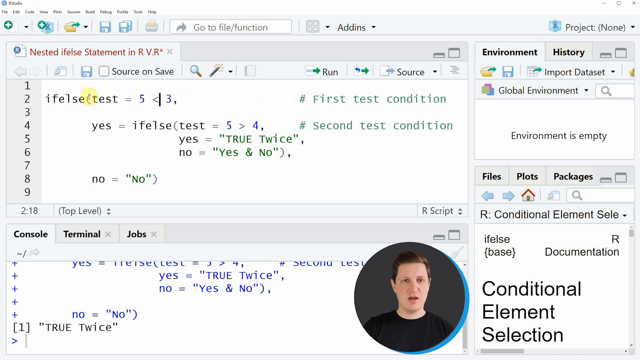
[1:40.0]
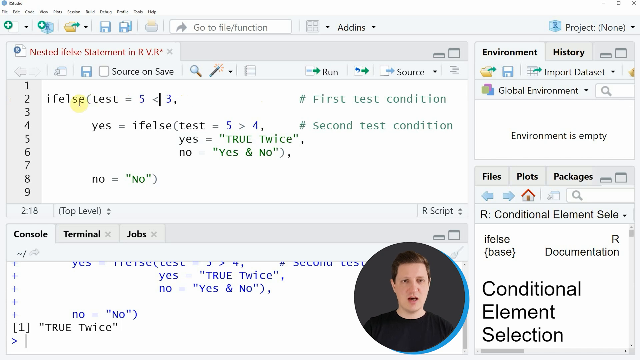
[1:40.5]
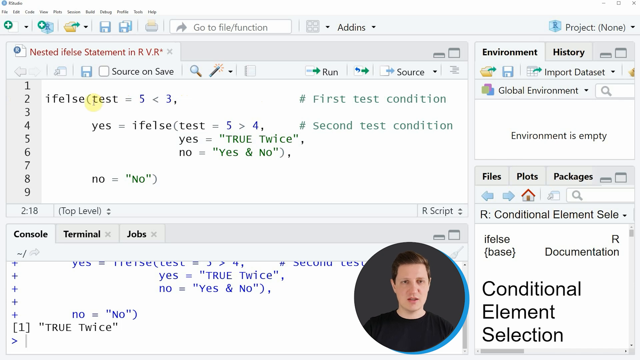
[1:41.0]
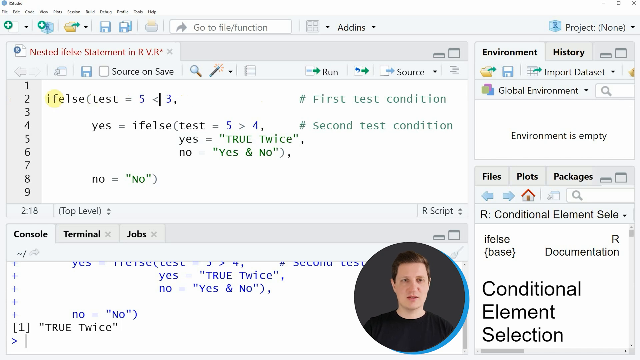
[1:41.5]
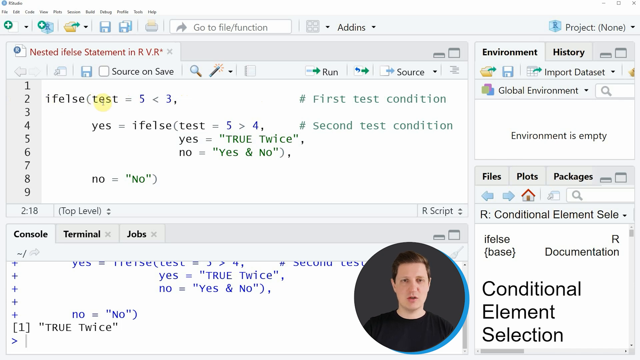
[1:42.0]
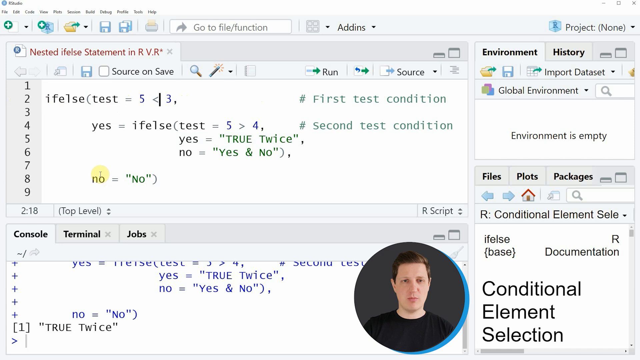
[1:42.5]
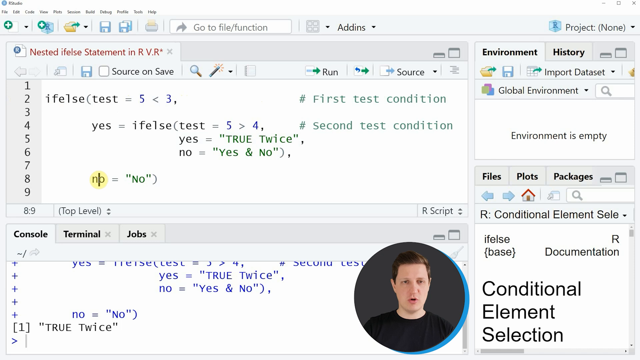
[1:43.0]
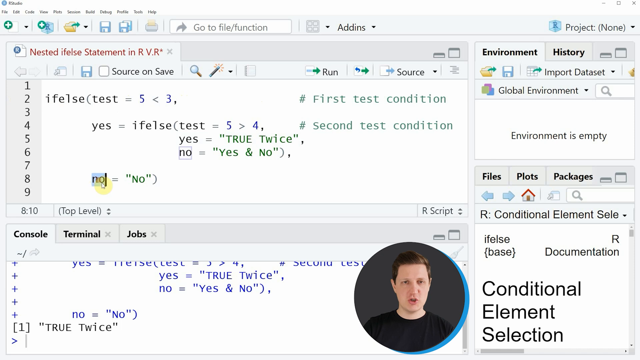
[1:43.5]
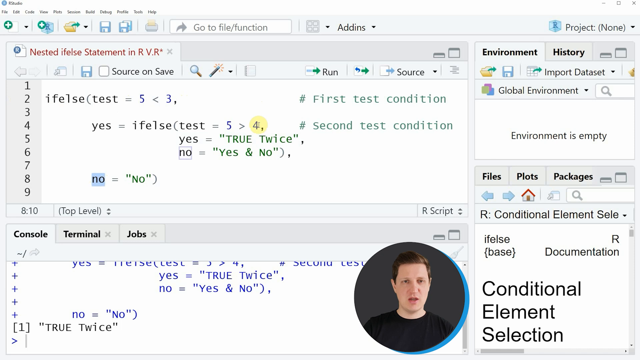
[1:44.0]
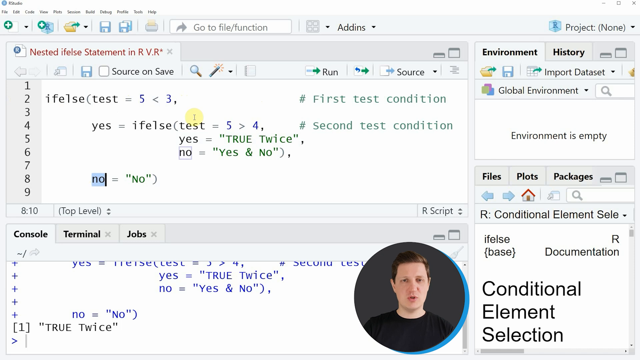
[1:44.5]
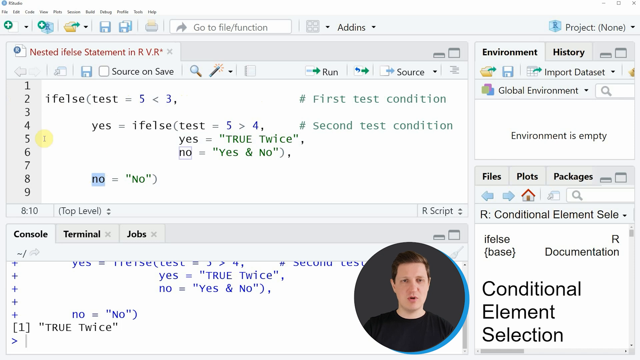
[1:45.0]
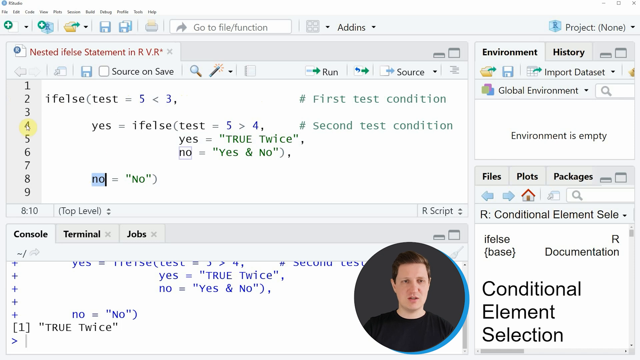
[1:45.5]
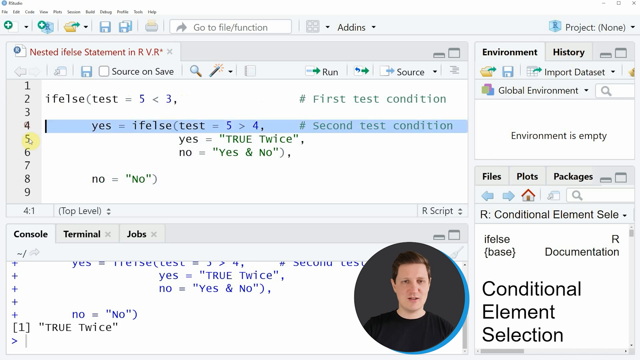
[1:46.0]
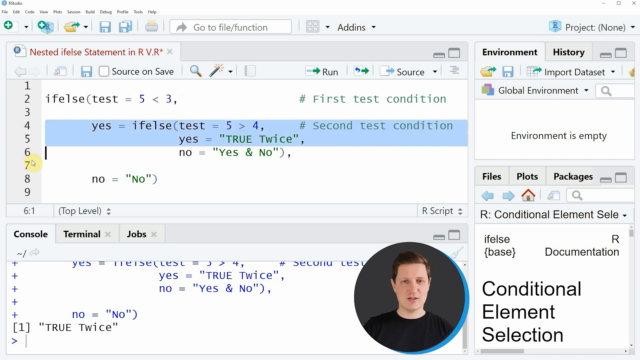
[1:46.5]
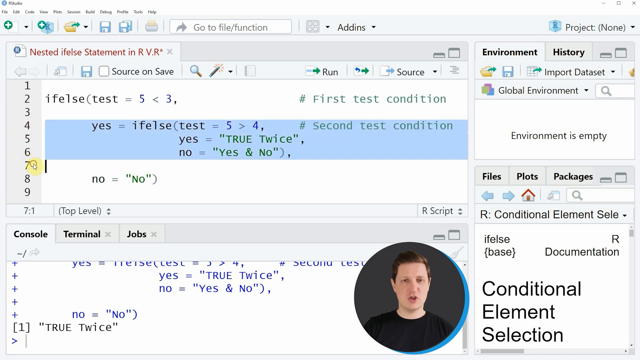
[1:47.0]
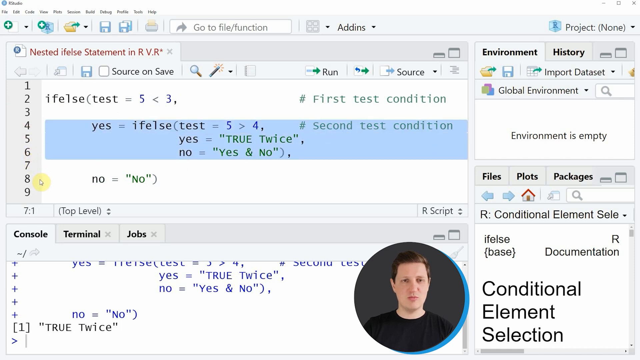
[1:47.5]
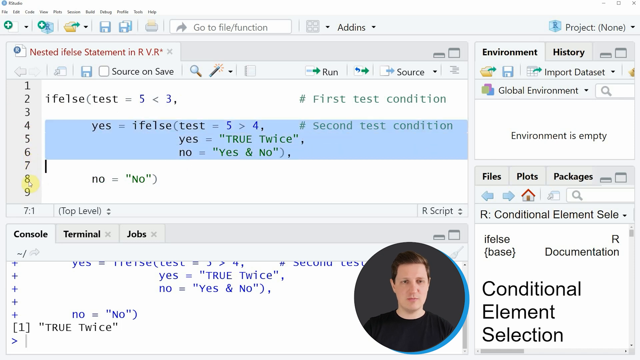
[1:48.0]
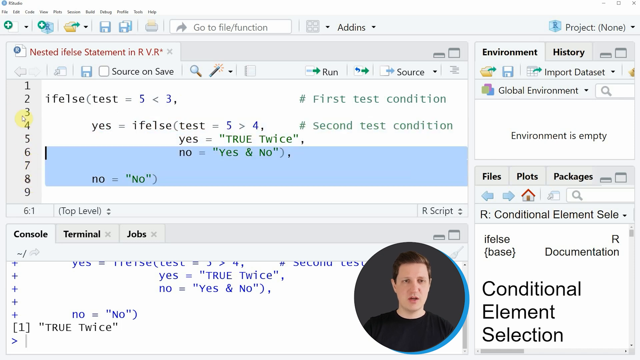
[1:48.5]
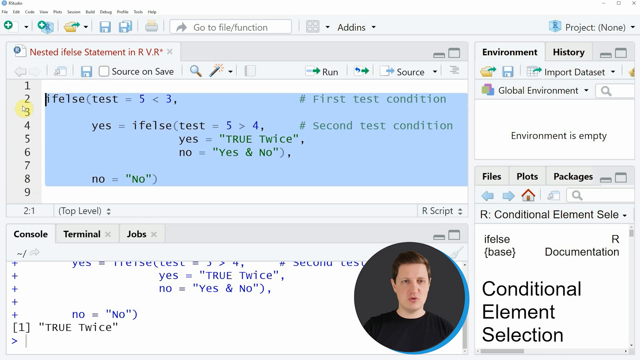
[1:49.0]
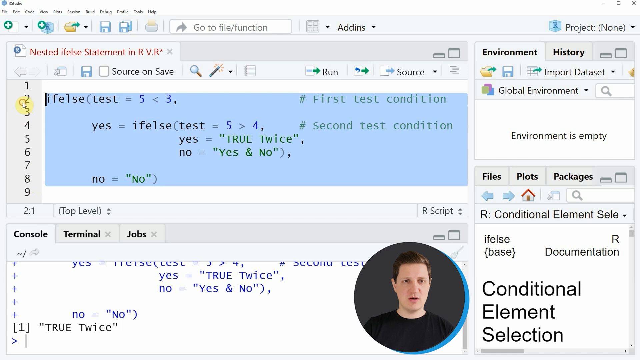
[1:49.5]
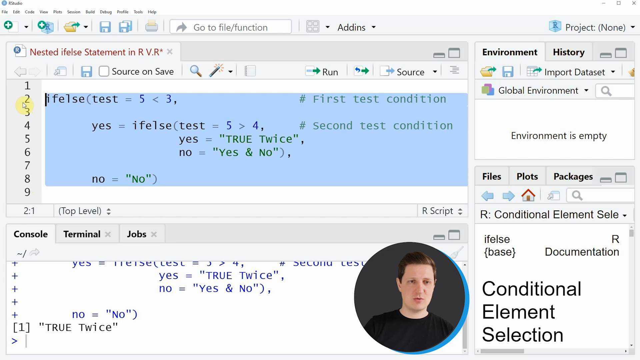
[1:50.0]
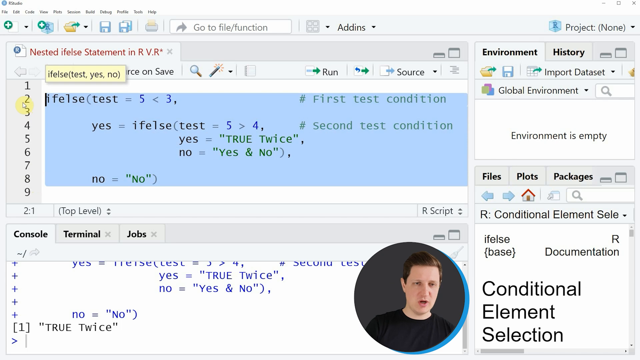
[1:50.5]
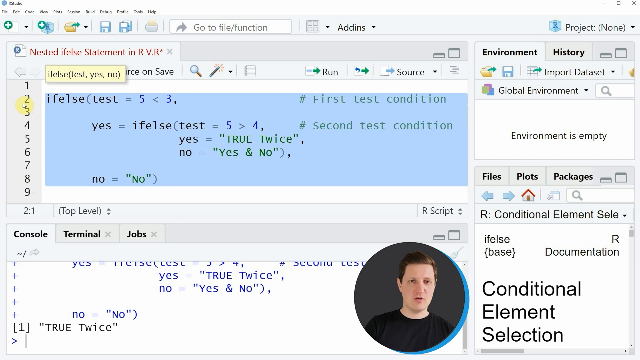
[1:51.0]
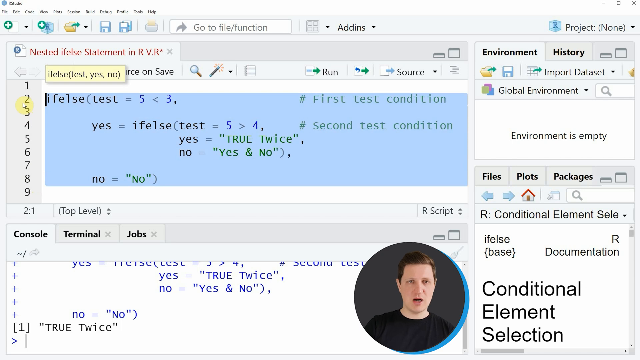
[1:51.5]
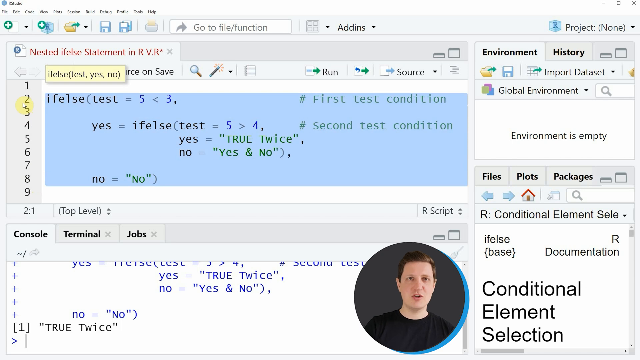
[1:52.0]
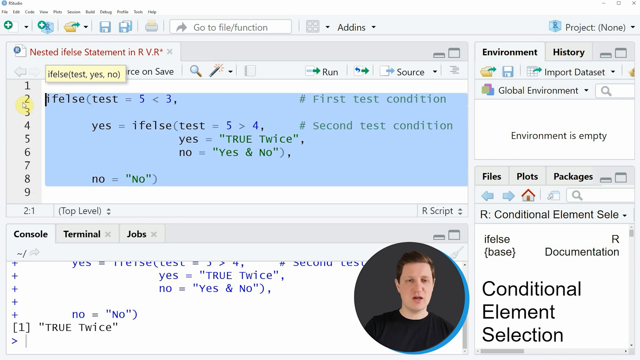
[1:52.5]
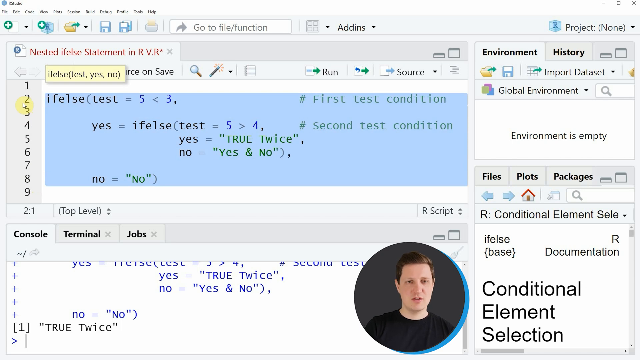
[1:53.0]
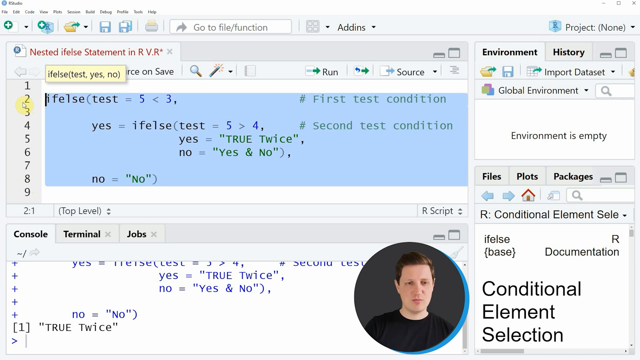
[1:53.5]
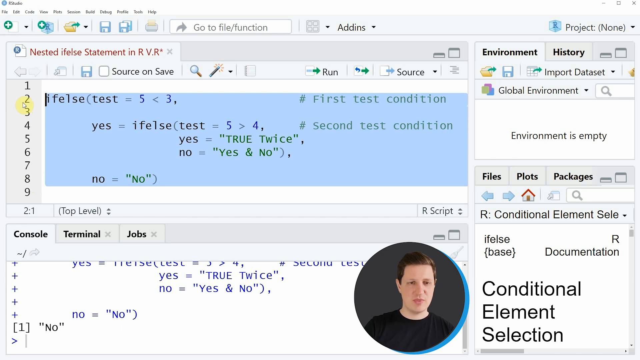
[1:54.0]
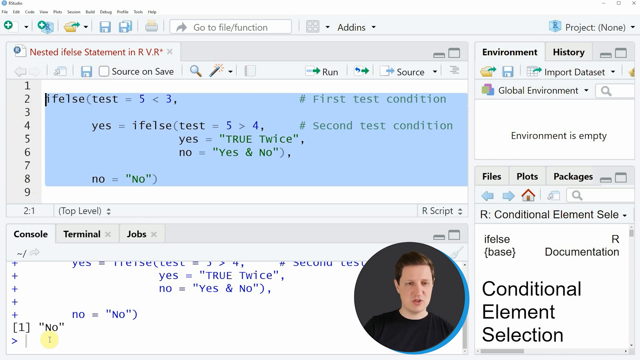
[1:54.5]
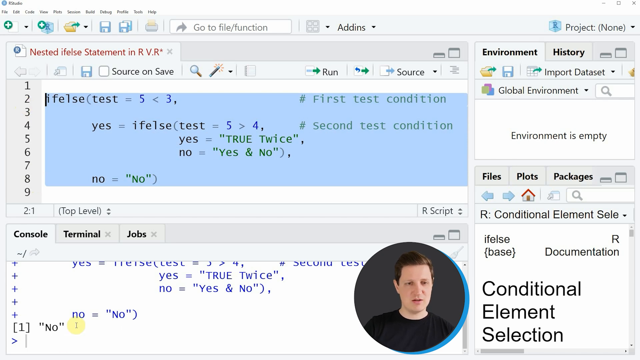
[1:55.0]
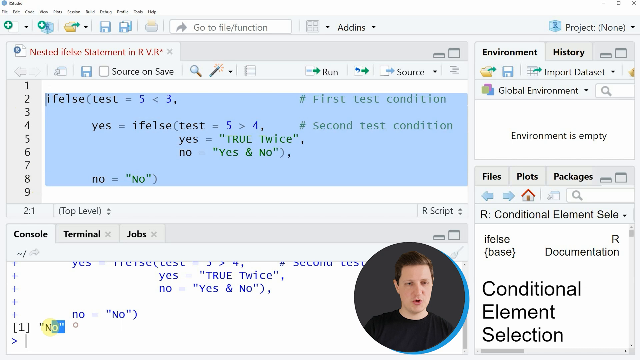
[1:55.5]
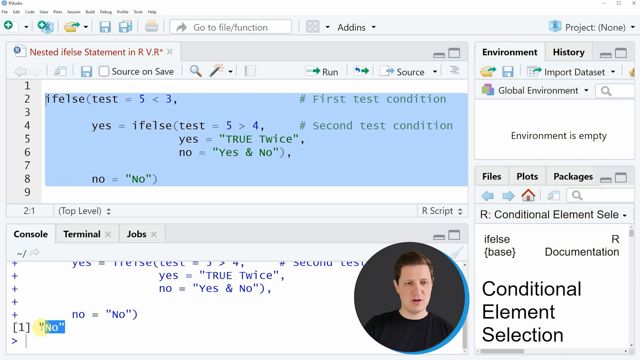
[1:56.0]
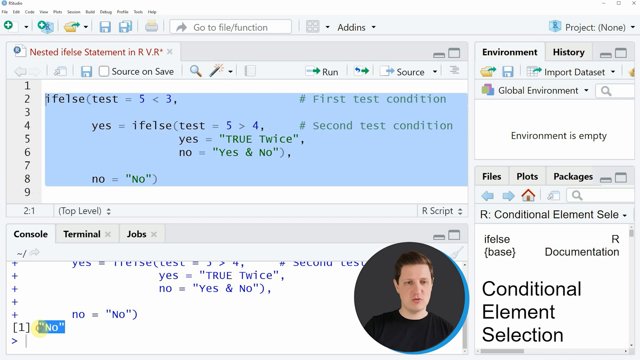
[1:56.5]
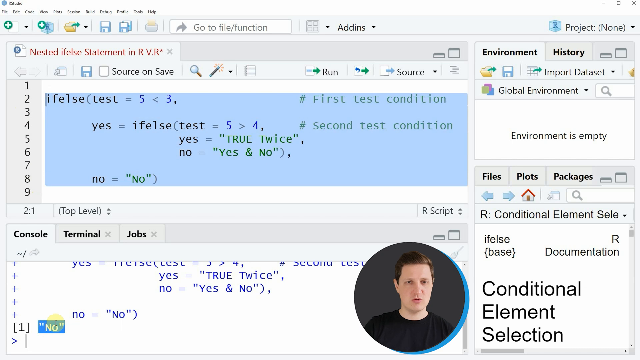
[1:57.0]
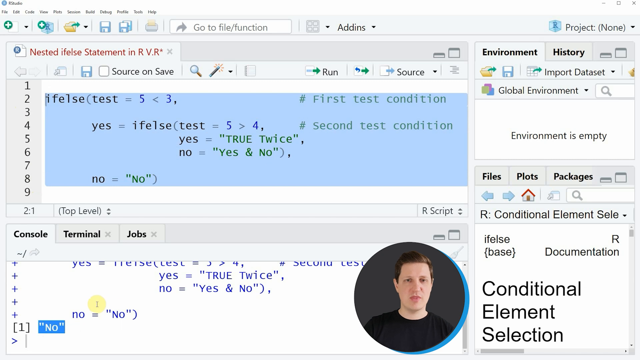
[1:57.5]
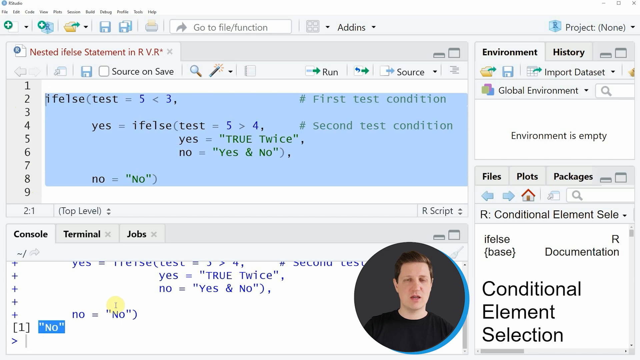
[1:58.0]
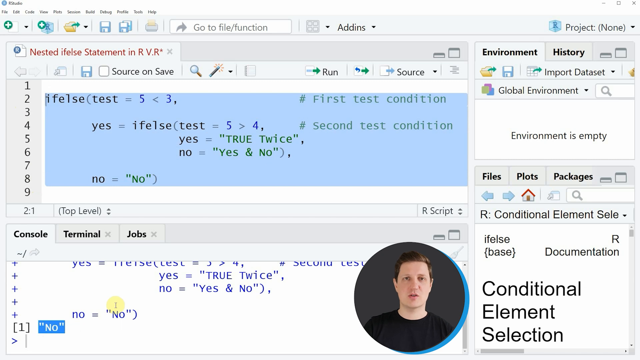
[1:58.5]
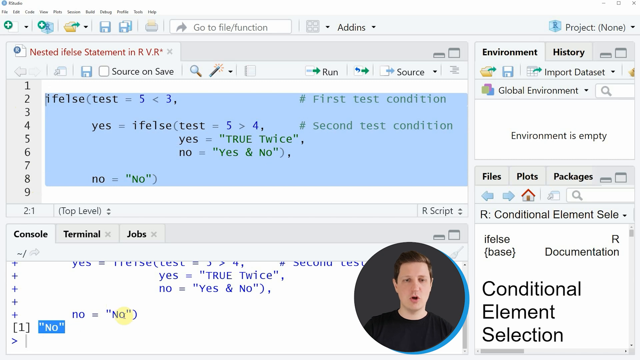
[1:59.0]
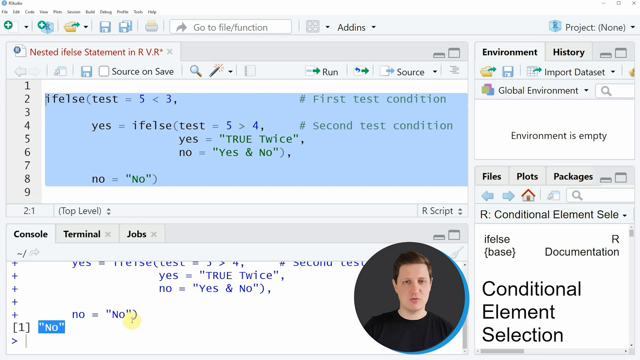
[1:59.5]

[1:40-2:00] The mouse, with its yellow circle highlight, is kind of hovering over the ifelse statement on line 2 in the top left "Nested Ifelse Statement in R V.R" panel. The cursor moves down to line 8, where it selects and highlights text, then kind of moves around rapidly a little. It clicks the number 4 on the left side and drags down to line 7, so all of the text on lines 4, 5 and 6 is highlighted in light blue. Next it clicks at the very beginning of line 8 and drags upward, highlighting all of the text on lines 2 through 8, so the majority of the panel is light blue. As the mouse kind of hovers over the number 2 on the left side of the panel, a small yellow pop-up box appears that says "ifelse(test, yes, no)". The cursor then goes down to the console panel at the very bottom and highlights the text "No", in quotes, next to the number 1 in brackets. The man then kind of takes a few seconds to give a little commentary.